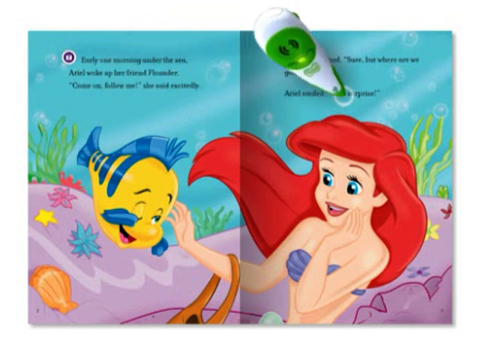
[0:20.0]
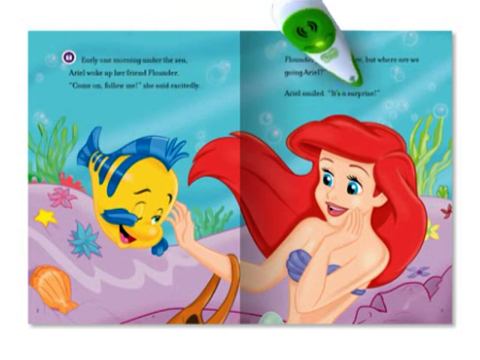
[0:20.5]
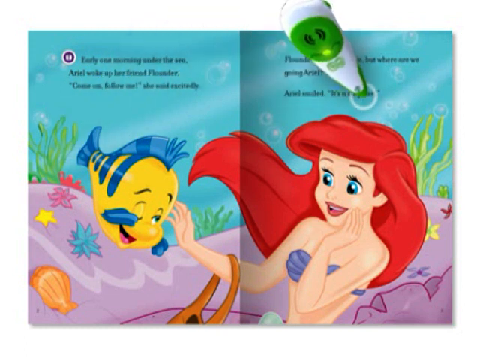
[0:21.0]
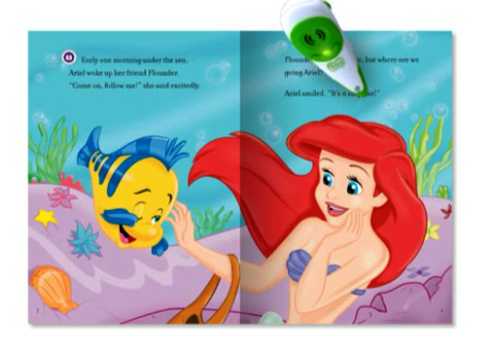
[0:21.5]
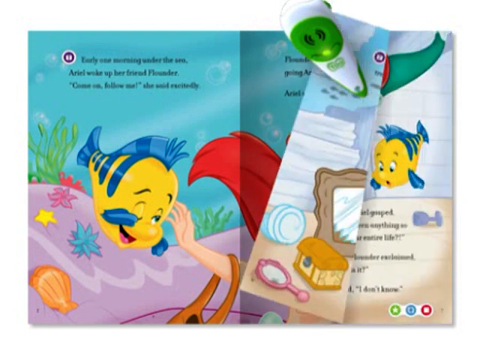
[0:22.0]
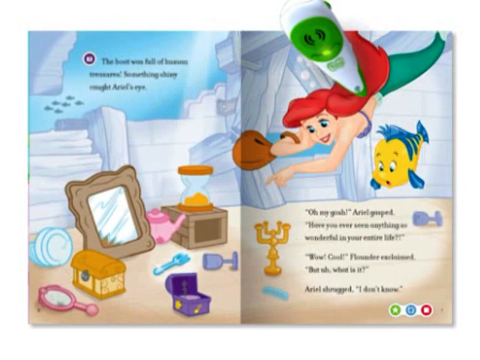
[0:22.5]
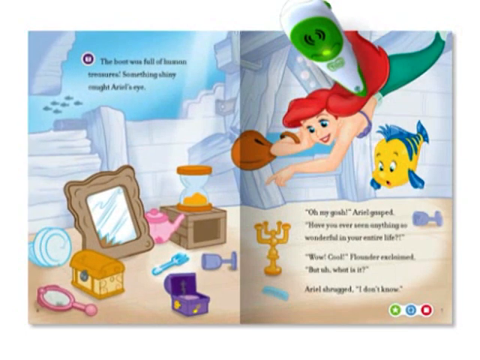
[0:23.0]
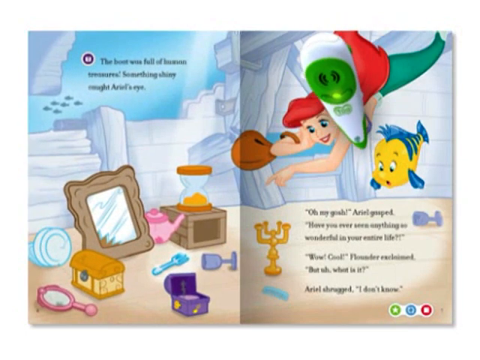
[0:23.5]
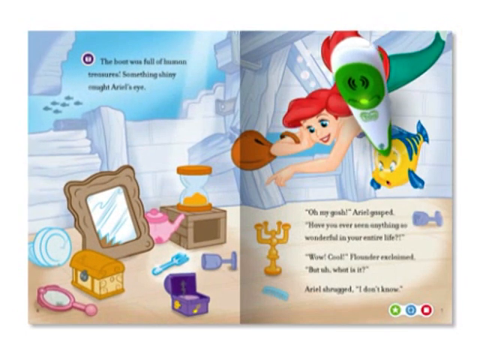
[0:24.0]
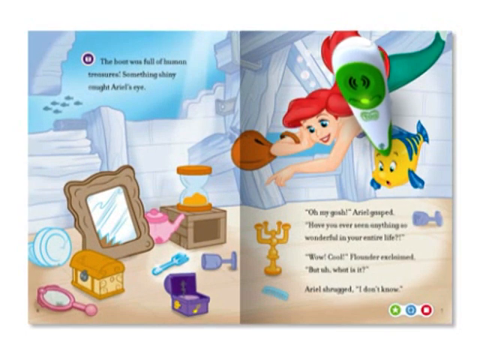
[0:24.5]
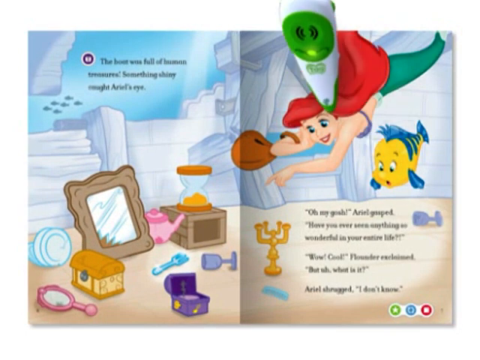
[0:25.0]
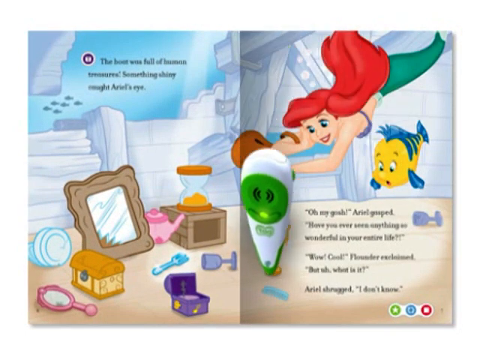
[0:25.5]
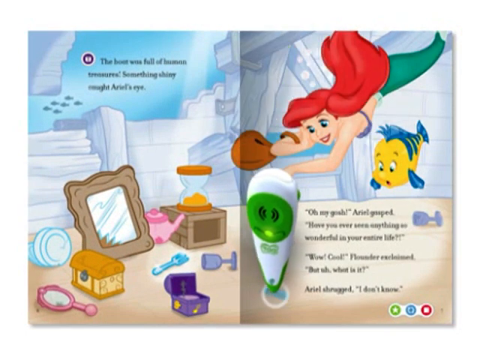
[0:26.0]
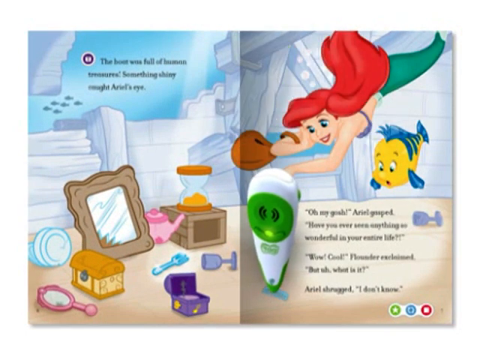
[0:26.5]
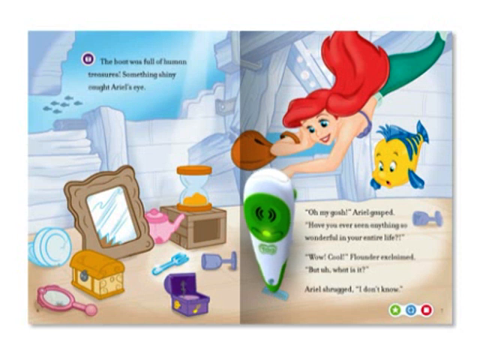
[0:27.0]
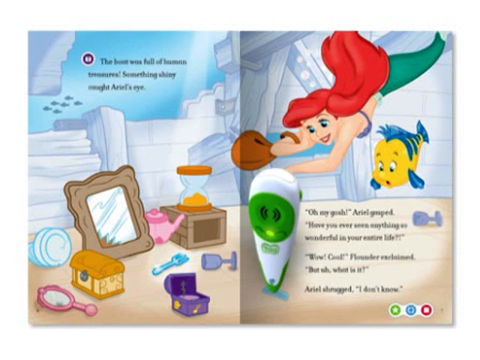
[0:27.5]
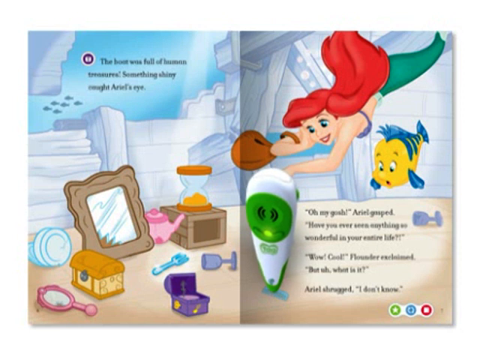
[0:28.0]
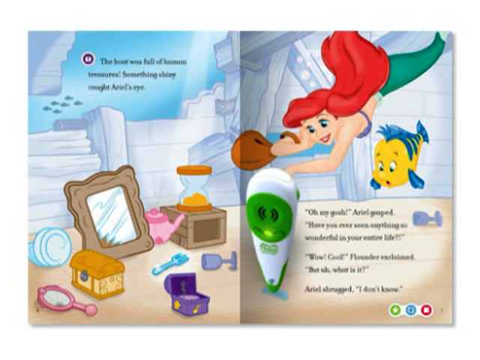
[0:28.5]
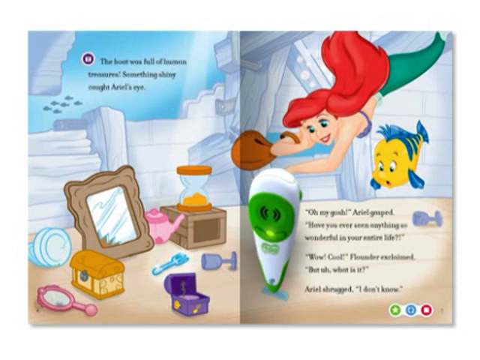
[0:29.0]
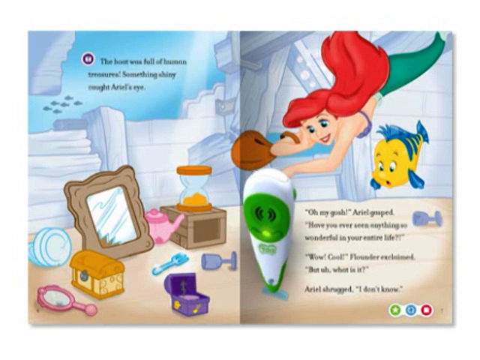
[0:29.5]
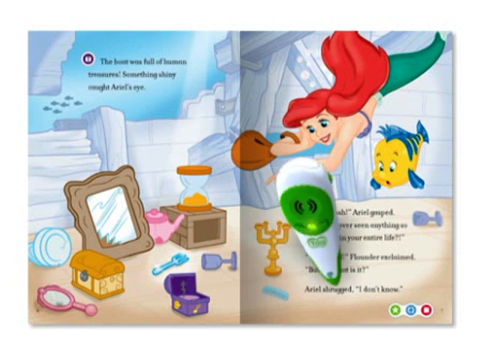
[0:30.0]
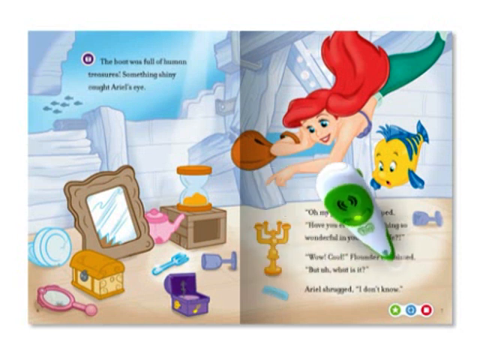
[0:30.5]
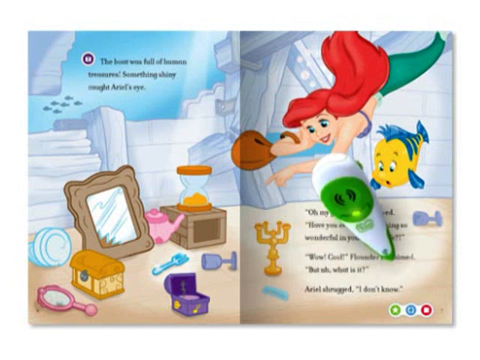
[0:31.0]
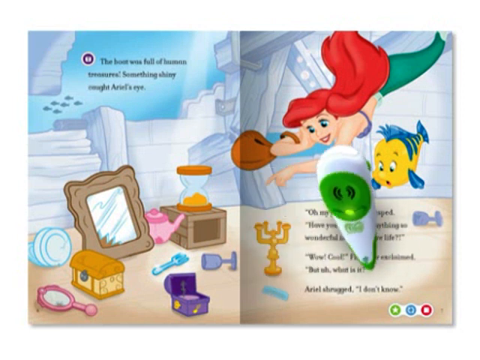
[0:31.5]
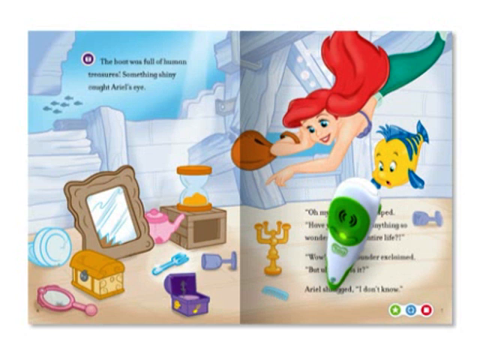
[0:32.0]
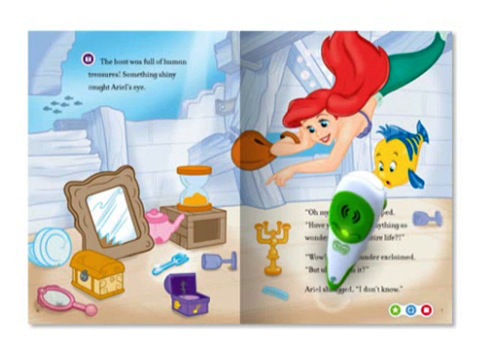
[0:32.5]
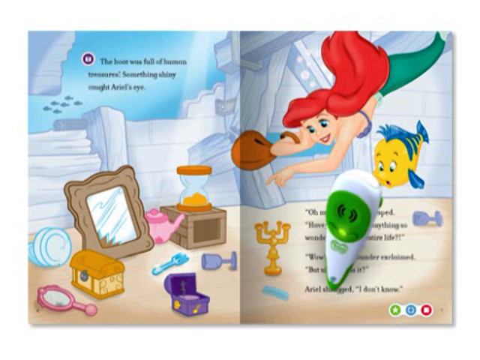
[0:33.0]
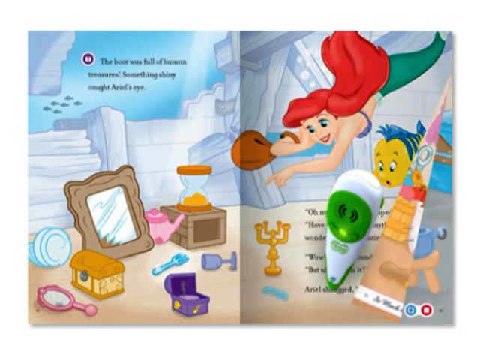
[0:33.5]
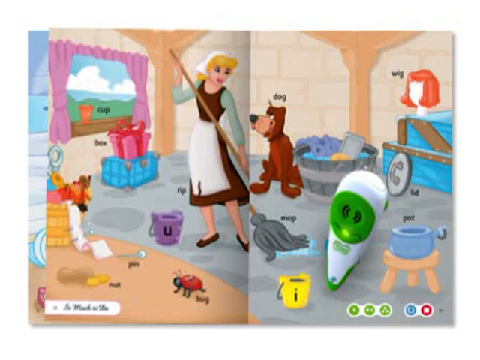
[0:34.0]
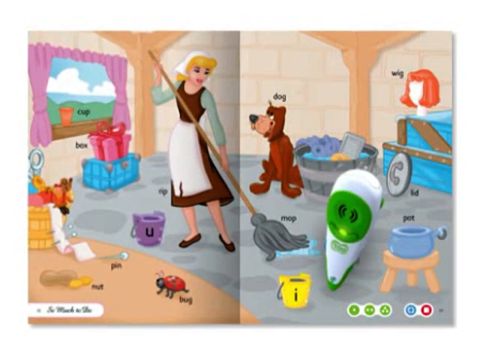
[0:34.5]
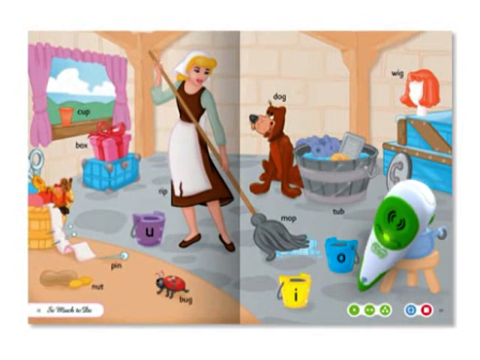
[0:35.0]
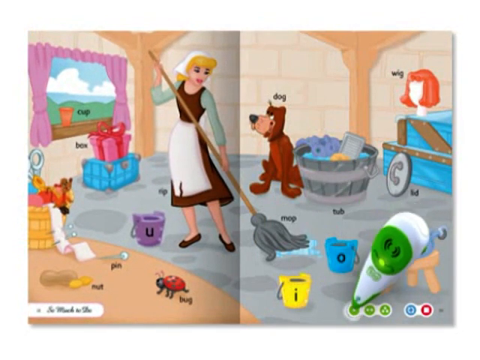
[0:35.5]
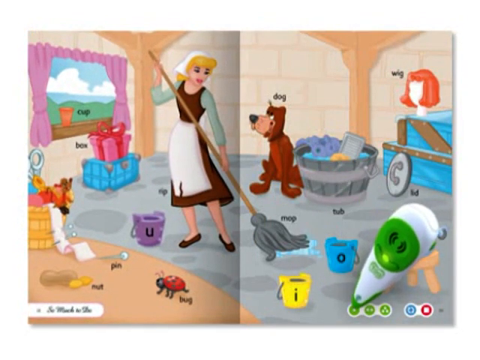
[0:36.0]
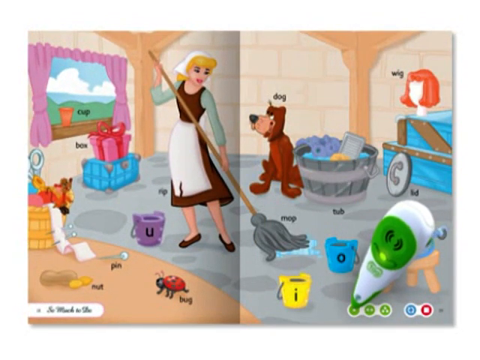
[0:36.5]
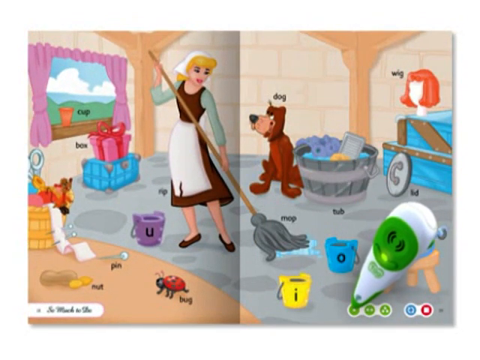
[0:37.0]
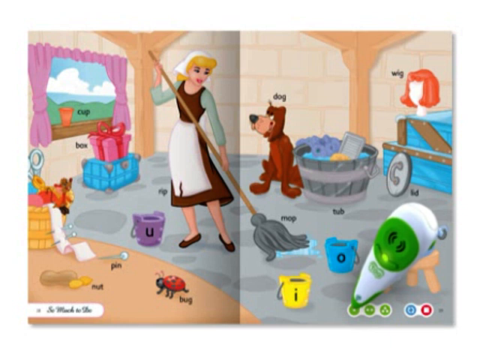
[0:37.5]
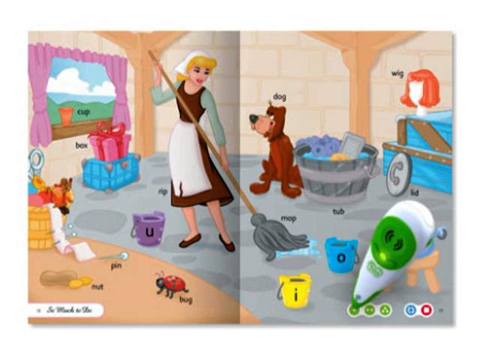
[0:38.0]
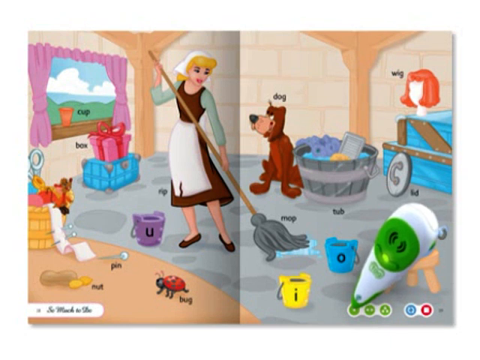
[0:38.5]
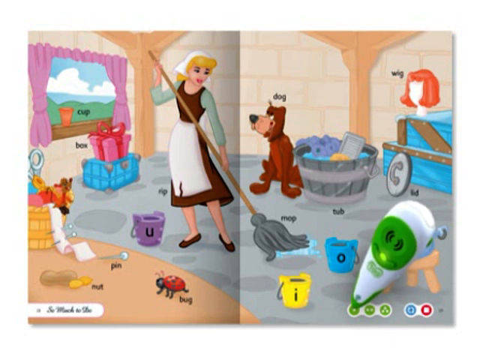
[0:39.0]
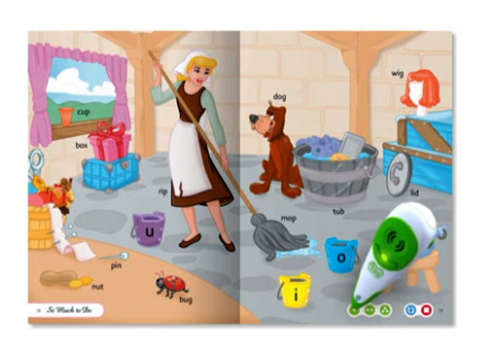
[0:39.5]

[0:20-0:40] The page flips, and the fish and the mermaid appear again, with text on the page. The device presses on the fish. In the background are white ruins, maybe marble. The left page shows a mirror, a chest, an hourglass, a kettle, a music box, a glass, another hand mirror and many other items, with a fork on the right side. On the right page, a glass of water is falling, and there are lights where candles can be placed. The machine moves around the booklet, pressing on different things on the pages, probably a text-to-voice device.